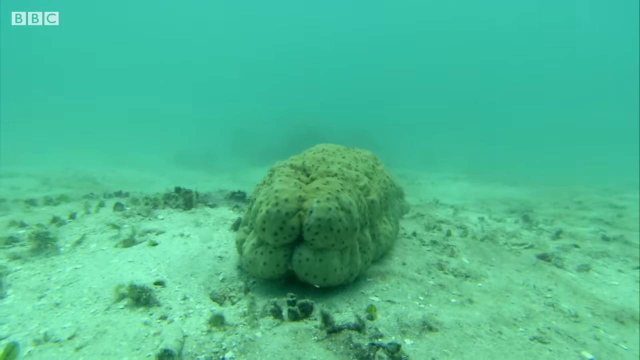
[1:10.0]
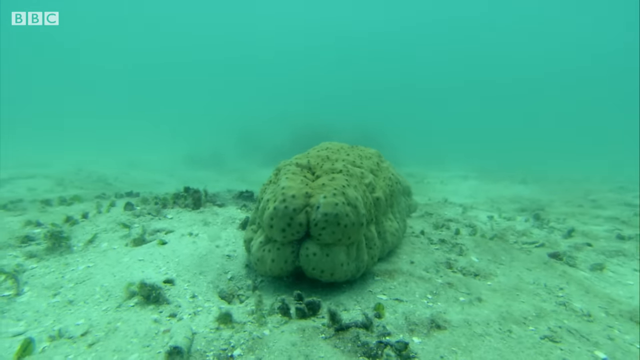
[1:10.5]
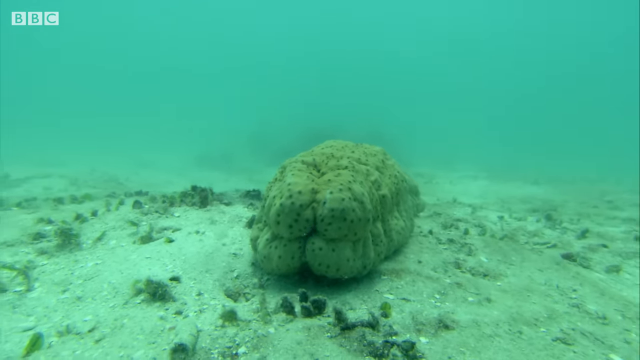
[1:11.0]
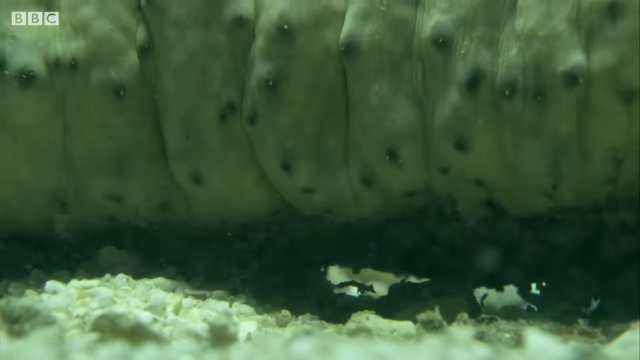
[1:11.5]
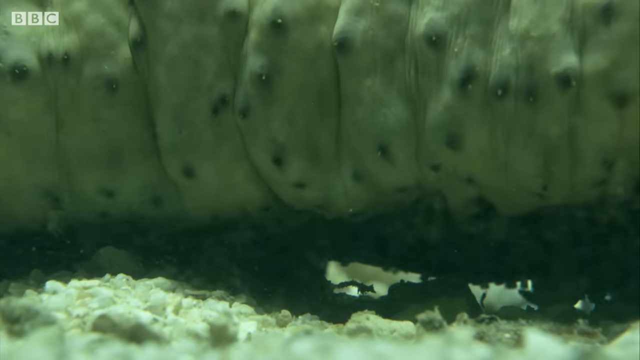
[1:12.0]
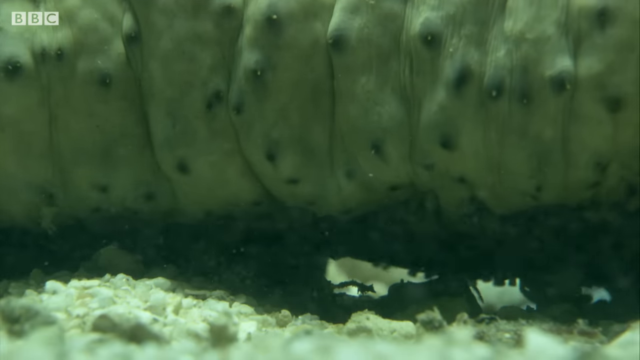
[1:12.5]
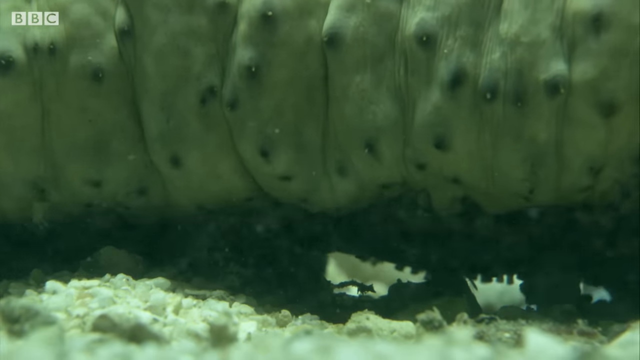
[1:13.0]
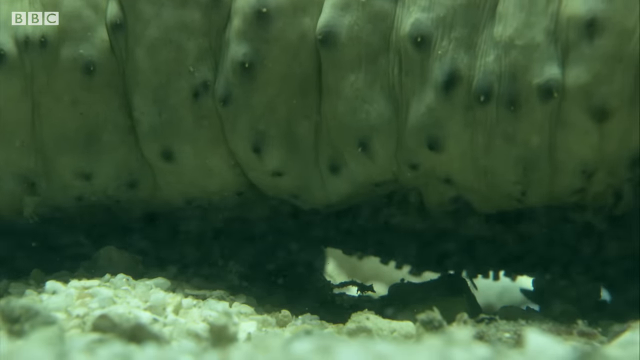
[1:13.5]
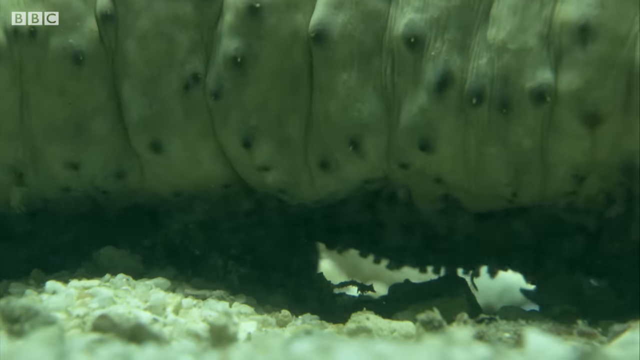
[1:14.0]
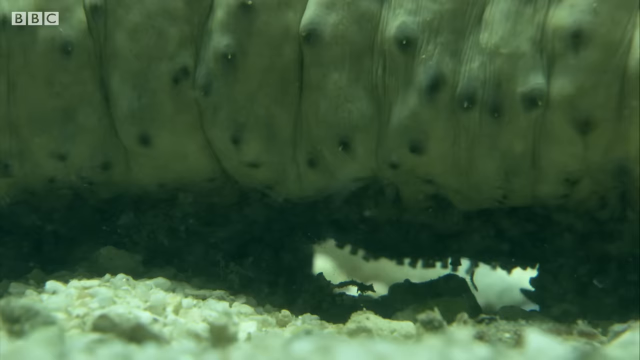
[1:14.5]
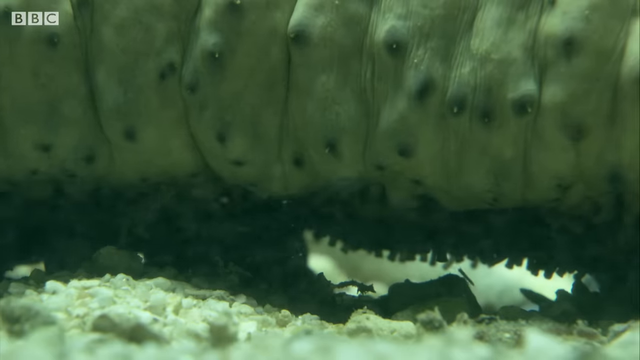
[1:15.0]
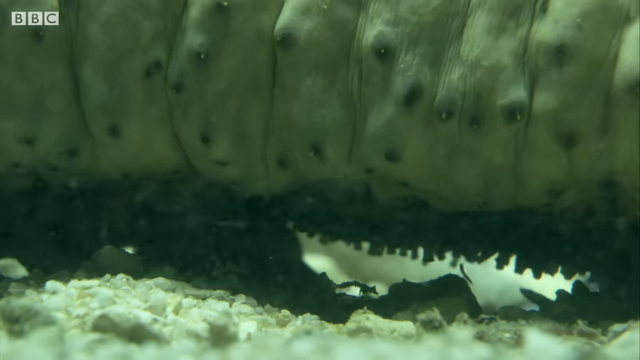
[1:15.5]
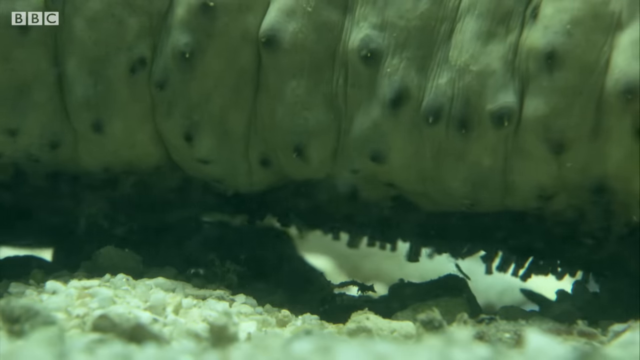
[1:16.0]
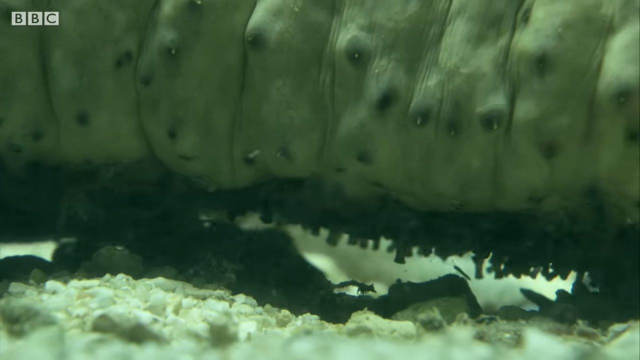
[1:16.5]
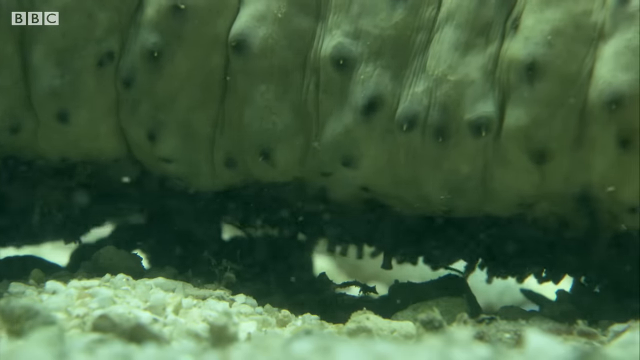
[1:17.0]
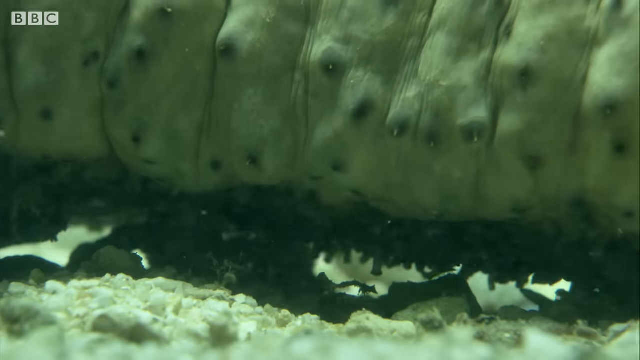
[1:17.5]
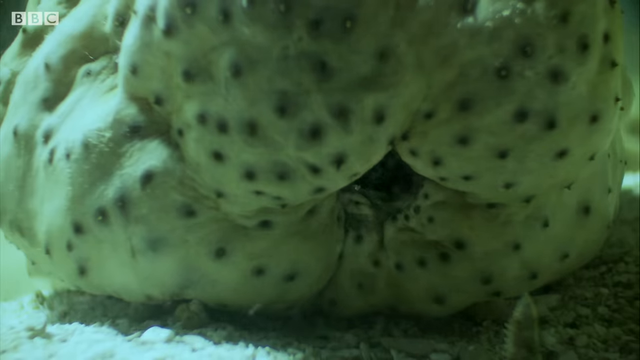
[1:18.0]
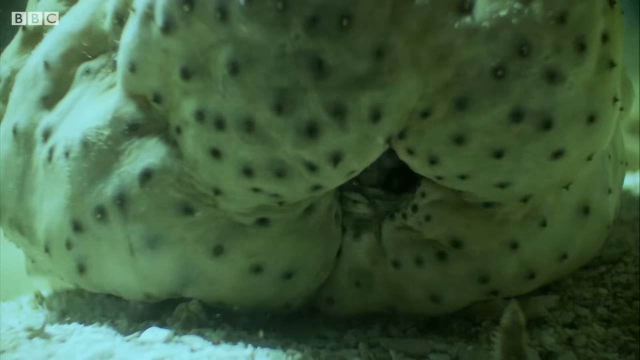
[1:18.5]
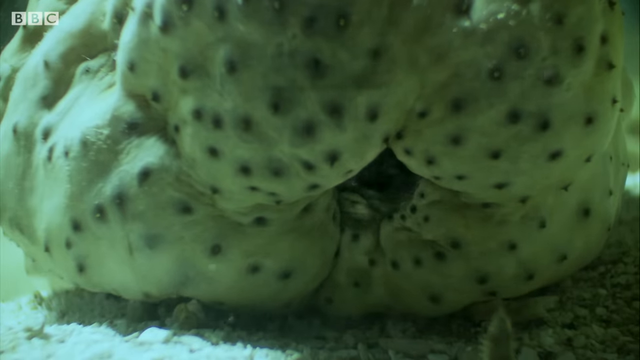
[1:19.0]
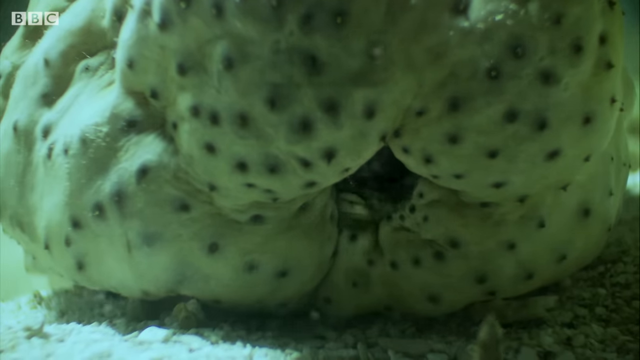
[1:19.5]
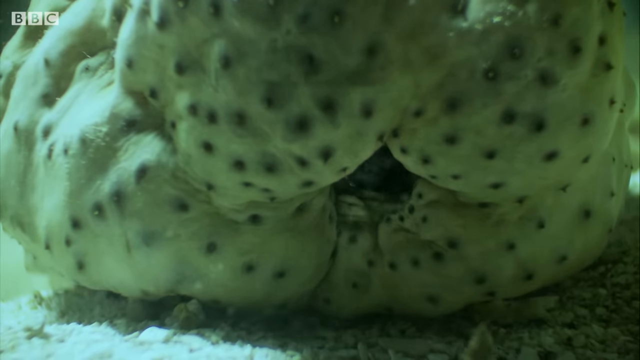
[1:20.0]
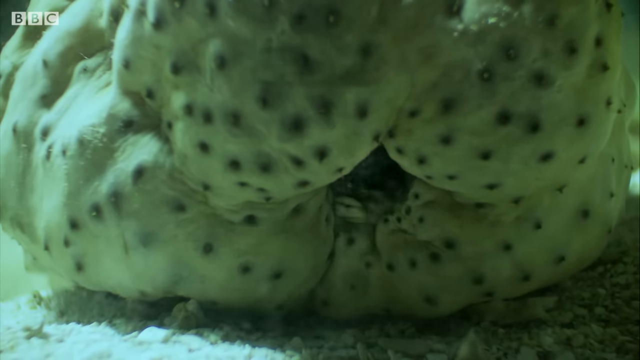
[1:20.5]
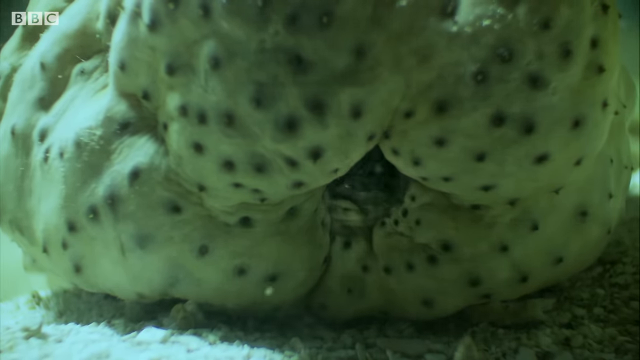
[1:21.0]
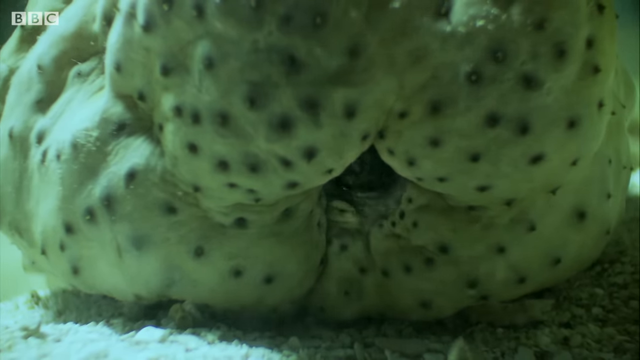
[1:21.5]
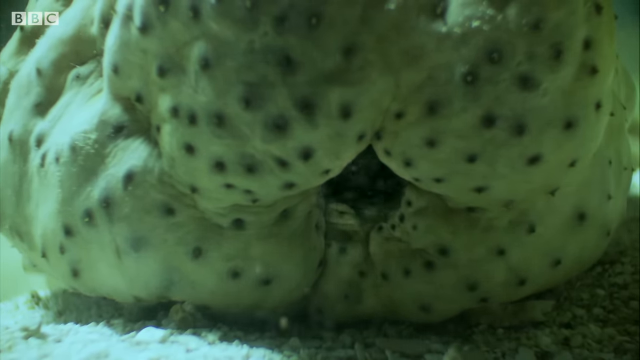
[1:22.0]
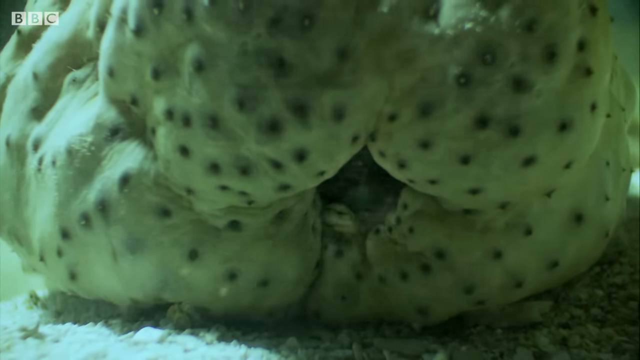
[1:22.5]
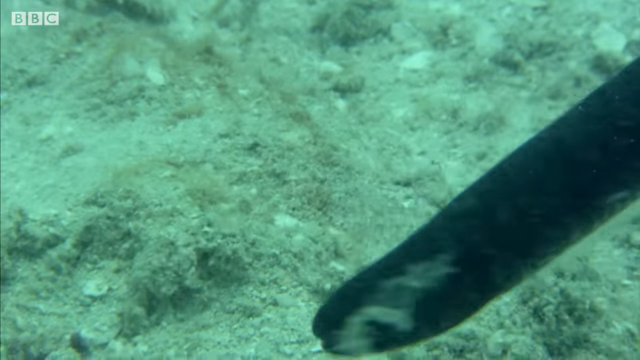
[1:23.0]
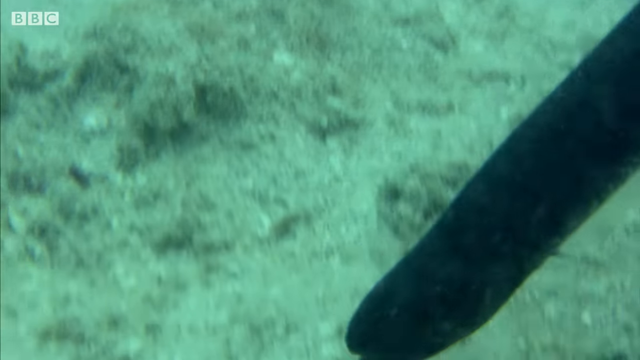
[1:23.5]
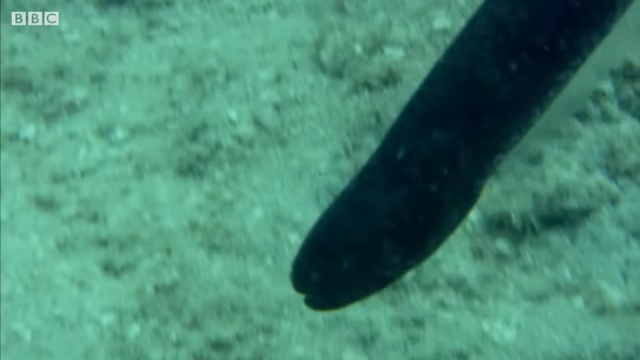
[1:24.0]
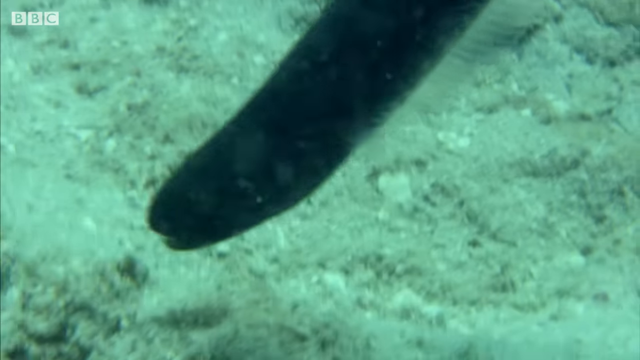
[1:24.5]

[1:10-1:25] The eel is apparently inside the organism; the eel cannot be seen, but the organism is visible and again appears to be breathing. Then the eel is out of the hole and swimming around again. The setting is still the sandy bottom and murky water. The creature seems able to glide across the bottom of the water, and it appears to have little tentacles or something similar on the underside of its body. It looks somewhat like a puffer and is a very strange-looking animal.